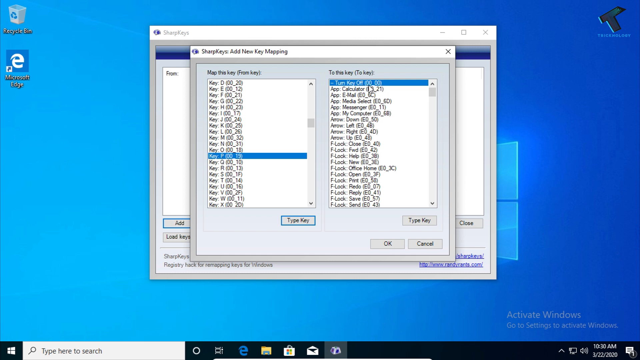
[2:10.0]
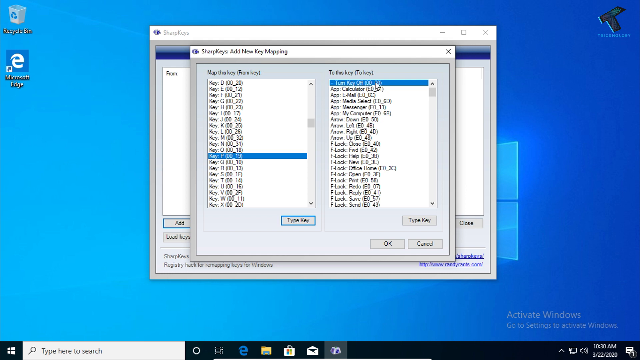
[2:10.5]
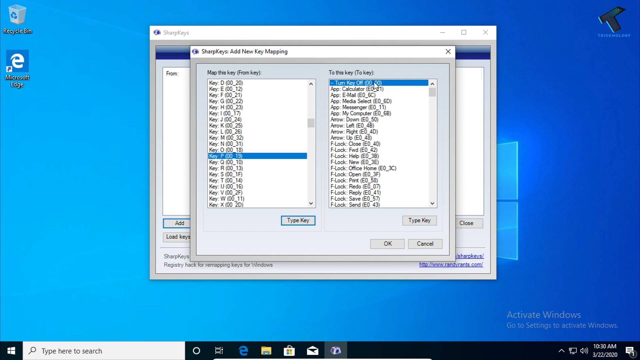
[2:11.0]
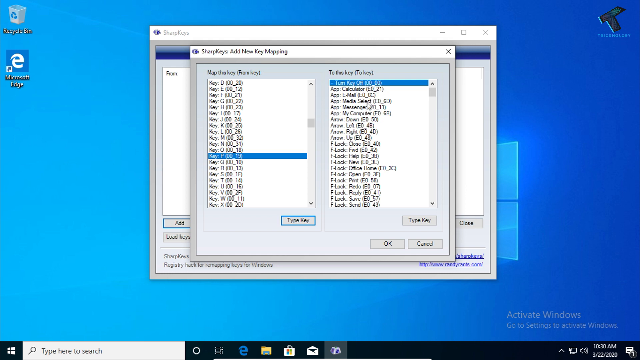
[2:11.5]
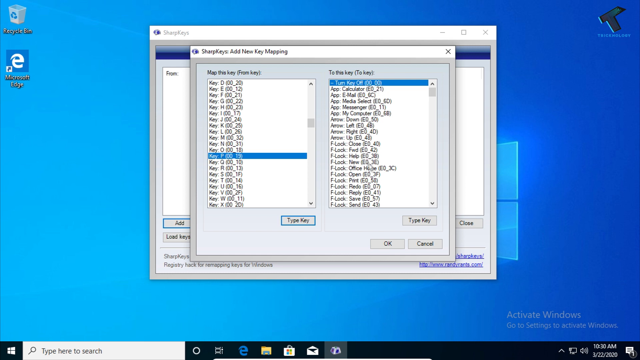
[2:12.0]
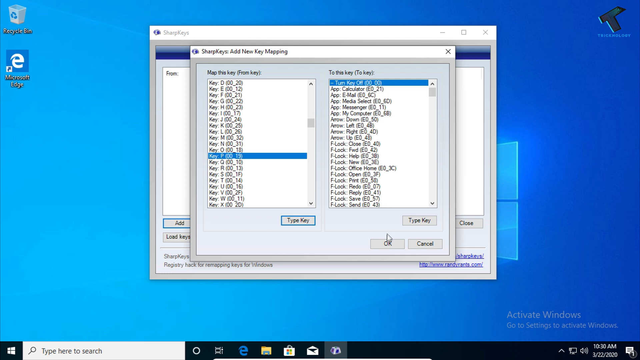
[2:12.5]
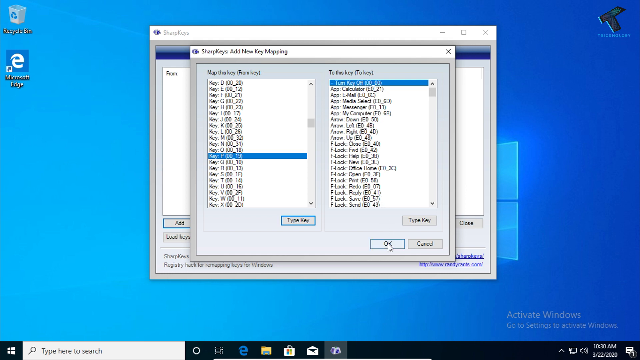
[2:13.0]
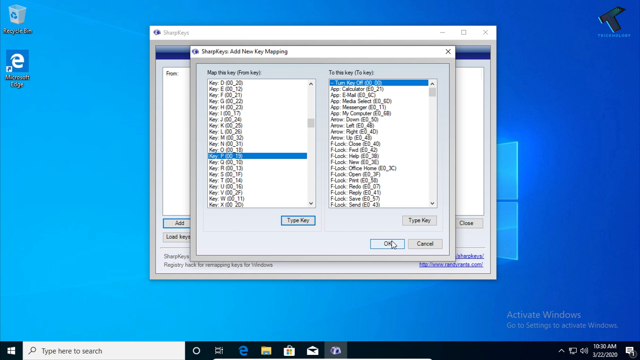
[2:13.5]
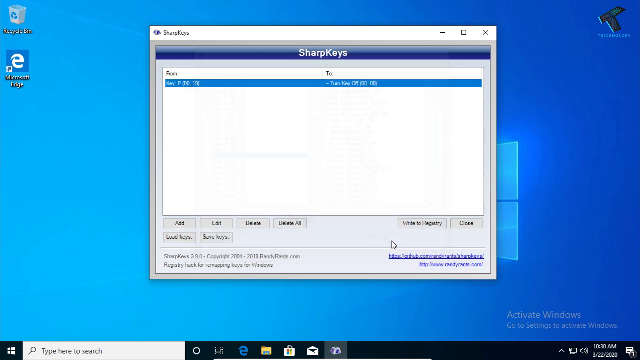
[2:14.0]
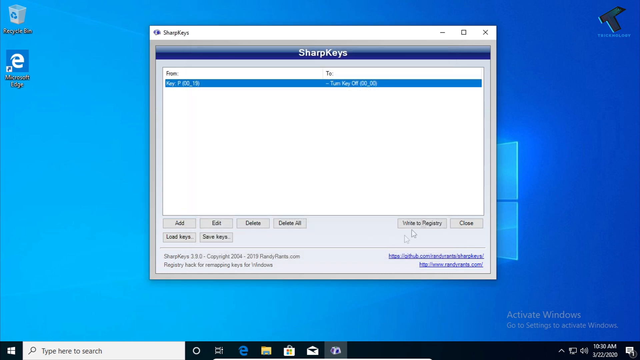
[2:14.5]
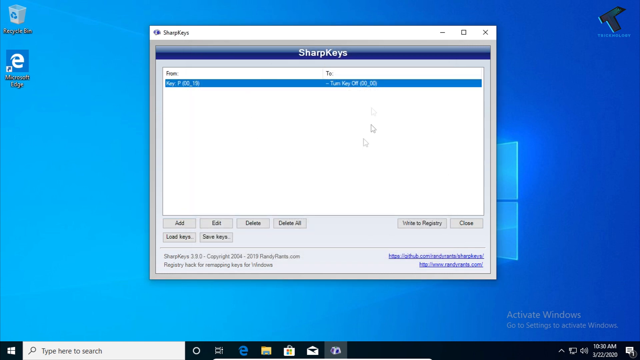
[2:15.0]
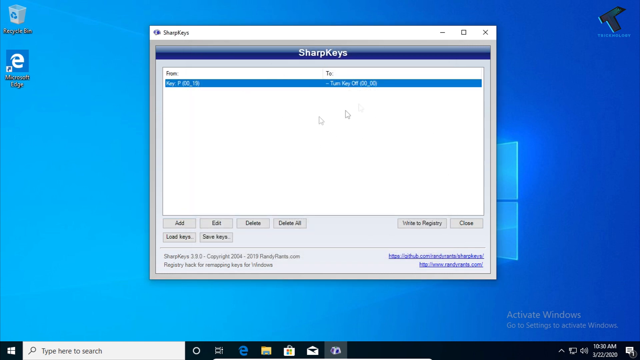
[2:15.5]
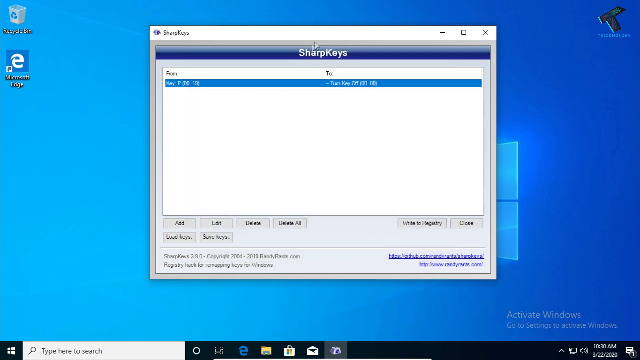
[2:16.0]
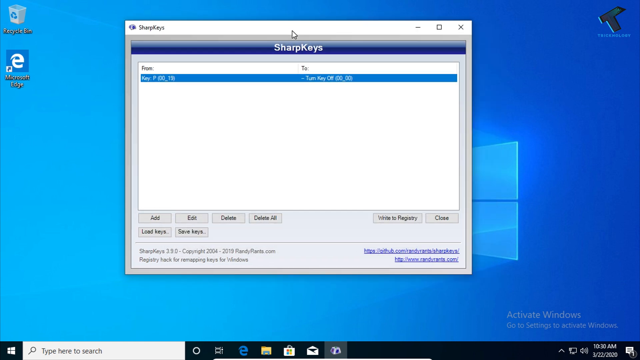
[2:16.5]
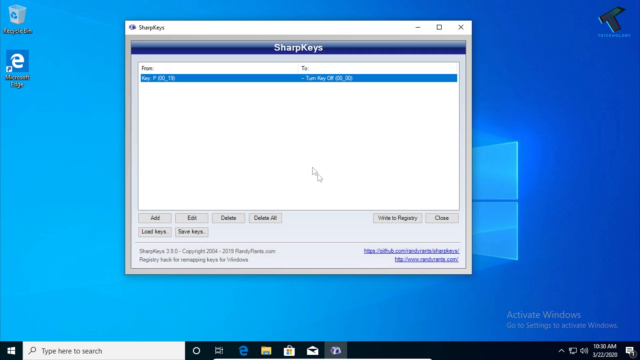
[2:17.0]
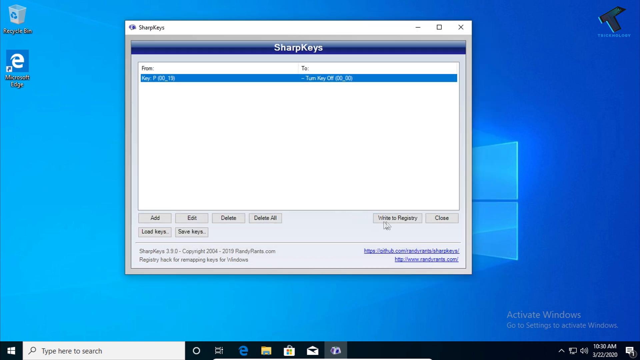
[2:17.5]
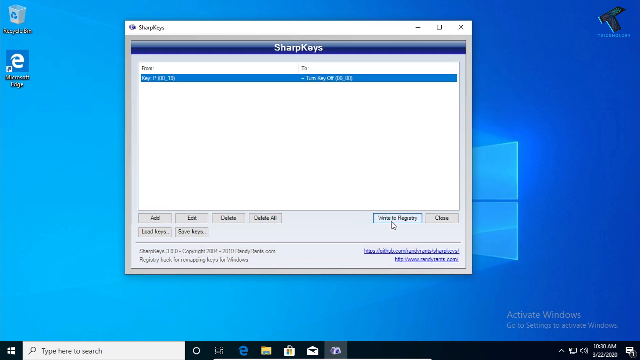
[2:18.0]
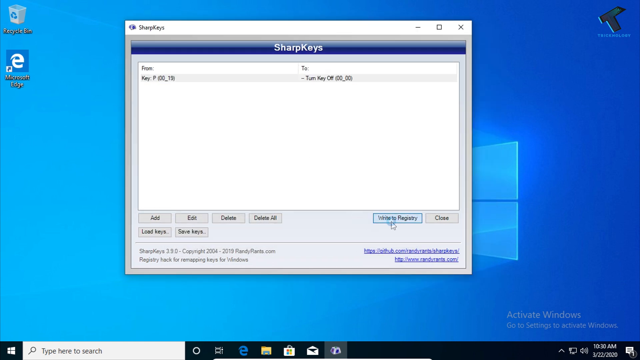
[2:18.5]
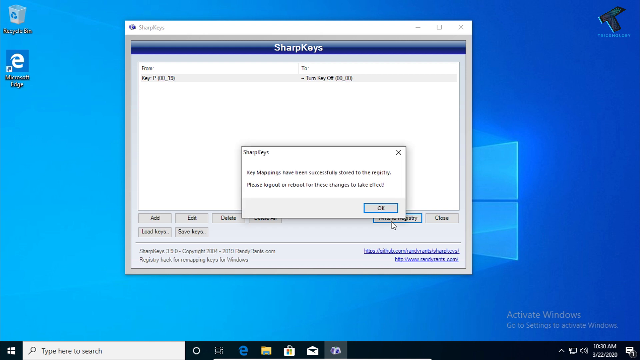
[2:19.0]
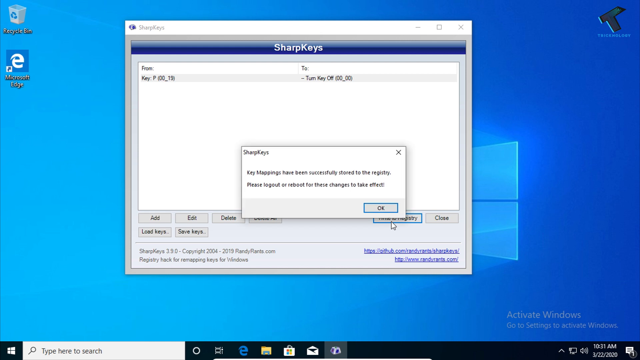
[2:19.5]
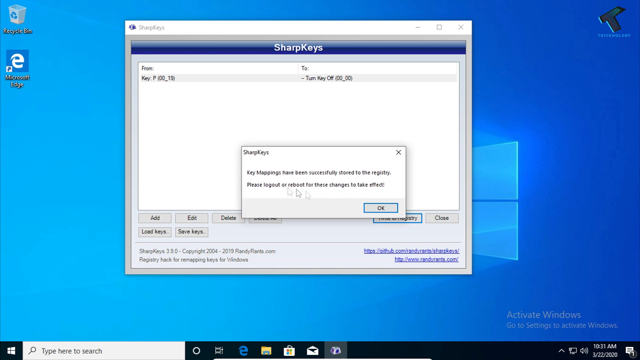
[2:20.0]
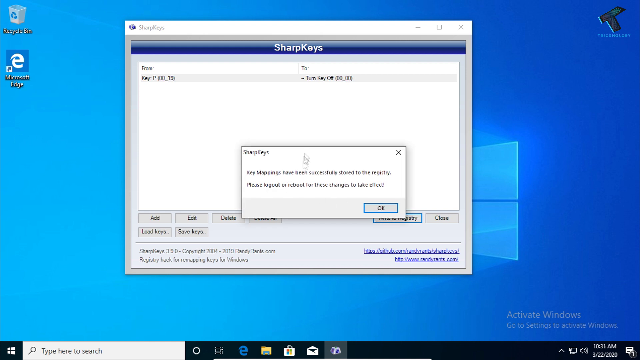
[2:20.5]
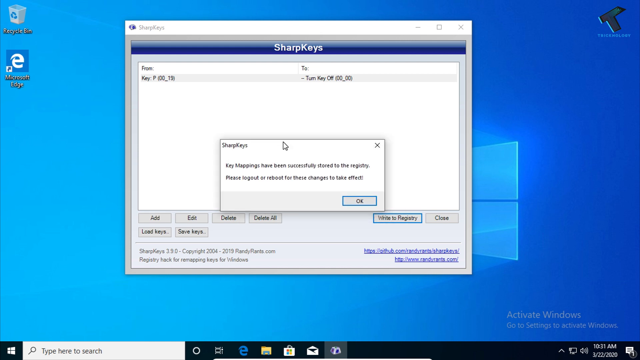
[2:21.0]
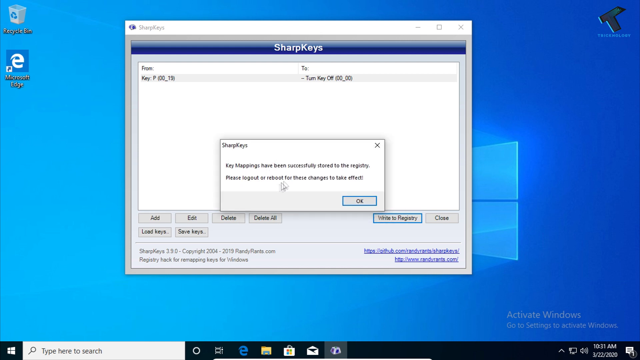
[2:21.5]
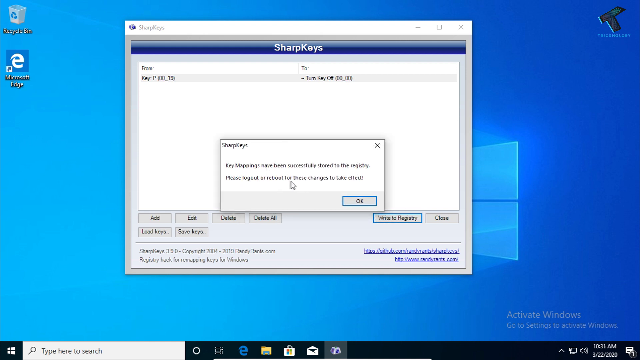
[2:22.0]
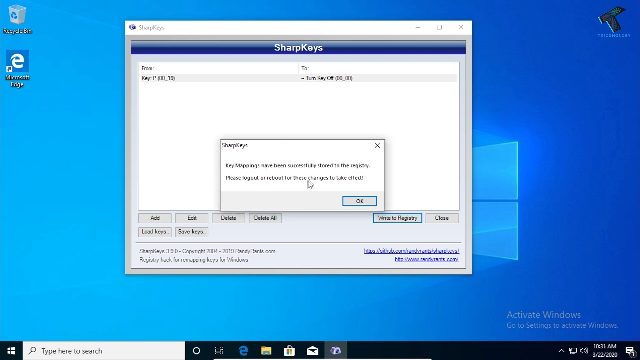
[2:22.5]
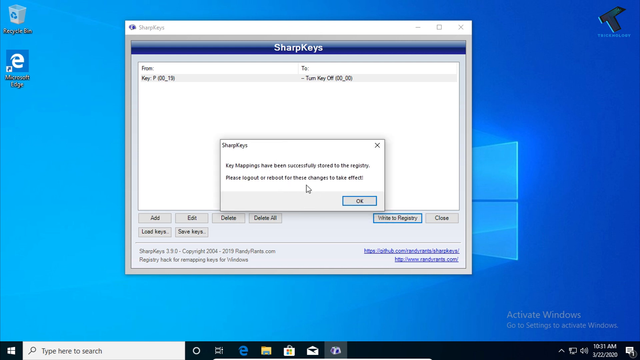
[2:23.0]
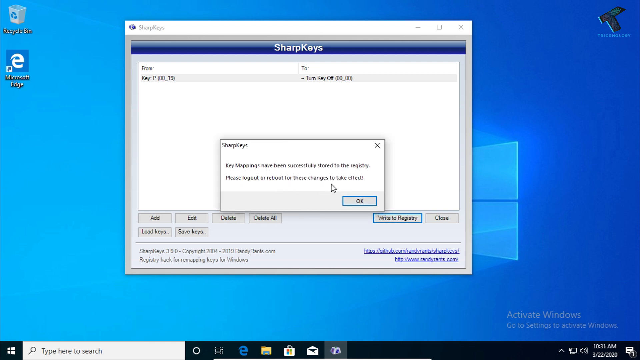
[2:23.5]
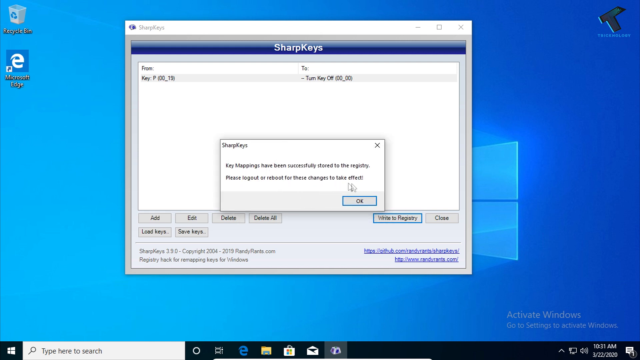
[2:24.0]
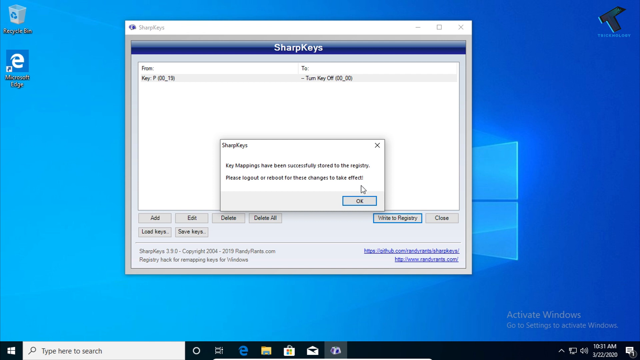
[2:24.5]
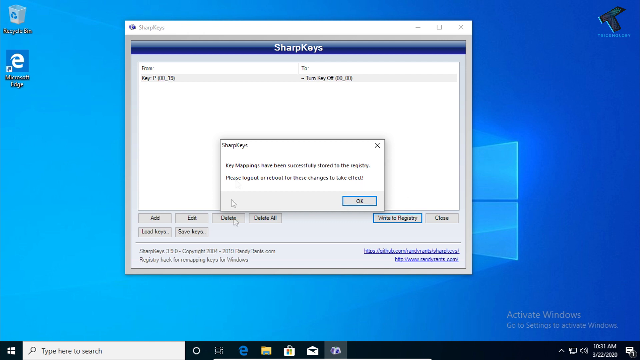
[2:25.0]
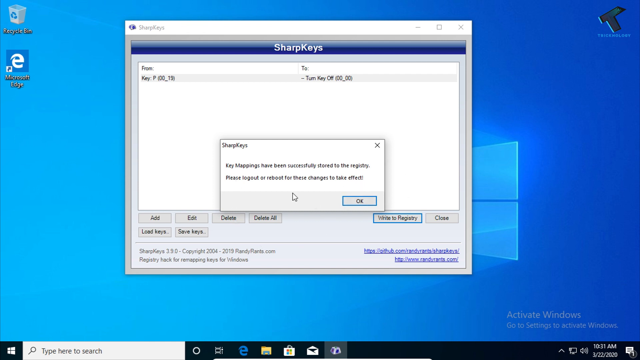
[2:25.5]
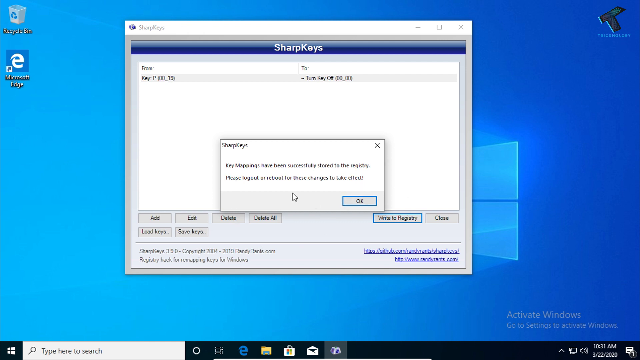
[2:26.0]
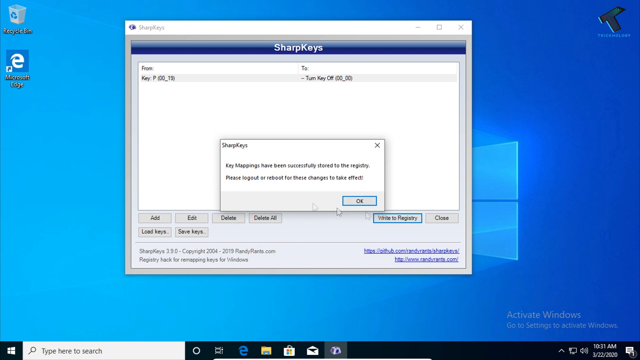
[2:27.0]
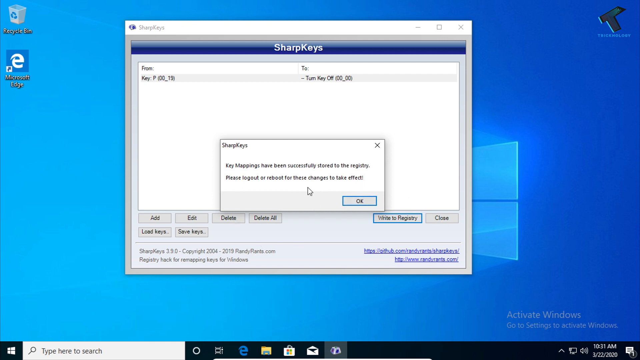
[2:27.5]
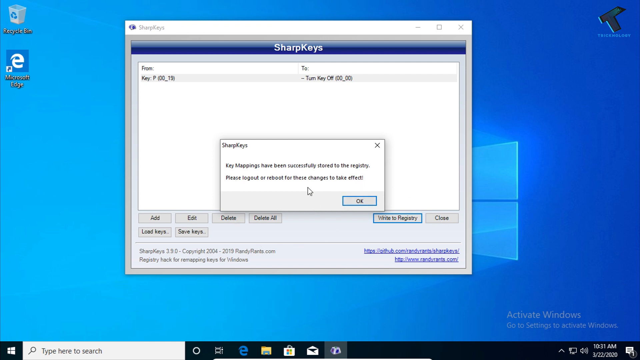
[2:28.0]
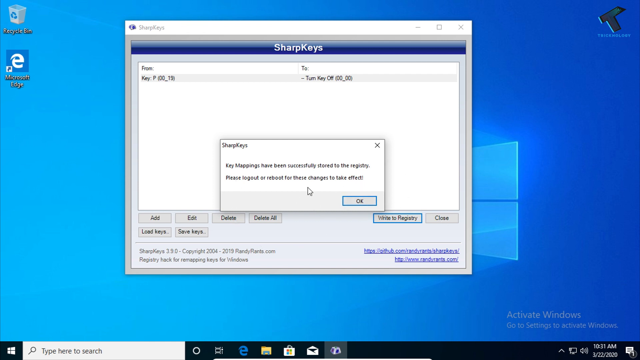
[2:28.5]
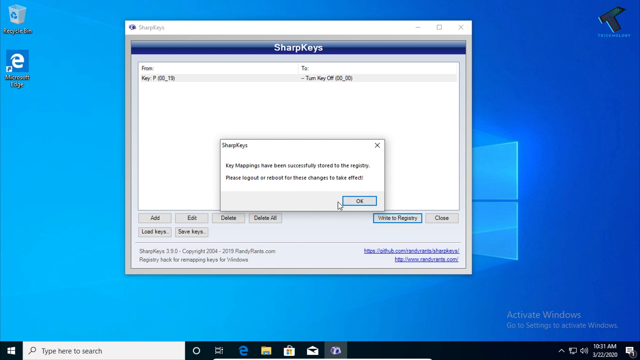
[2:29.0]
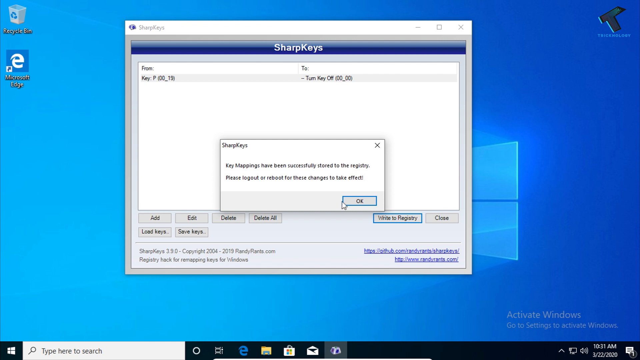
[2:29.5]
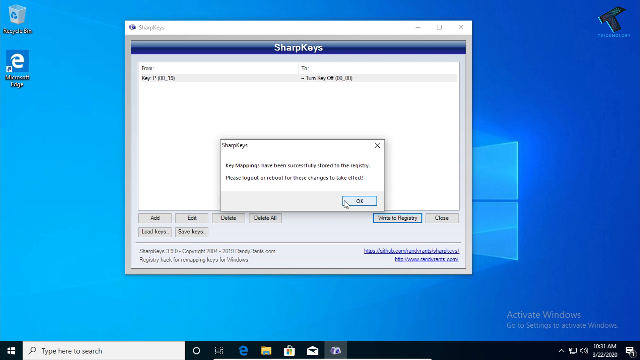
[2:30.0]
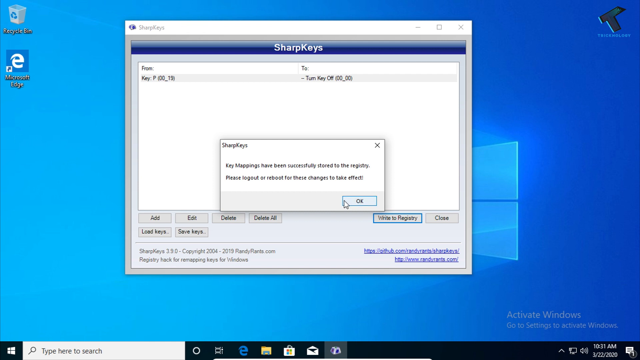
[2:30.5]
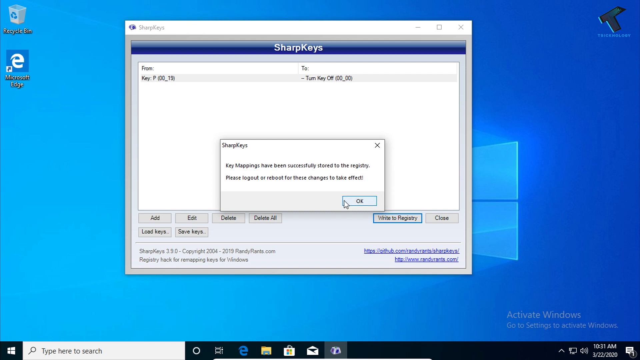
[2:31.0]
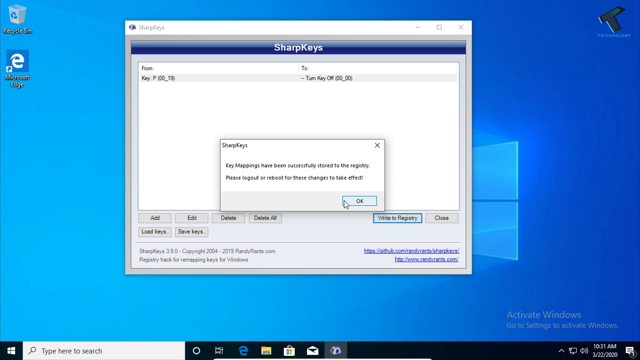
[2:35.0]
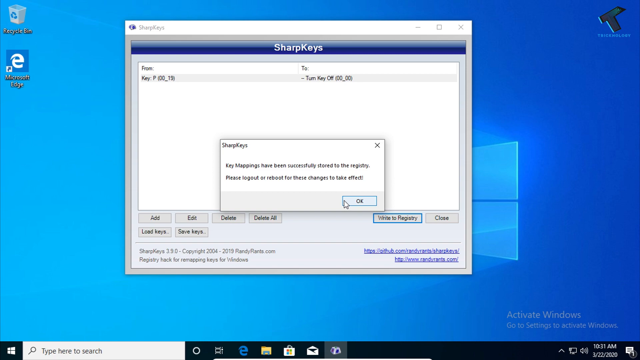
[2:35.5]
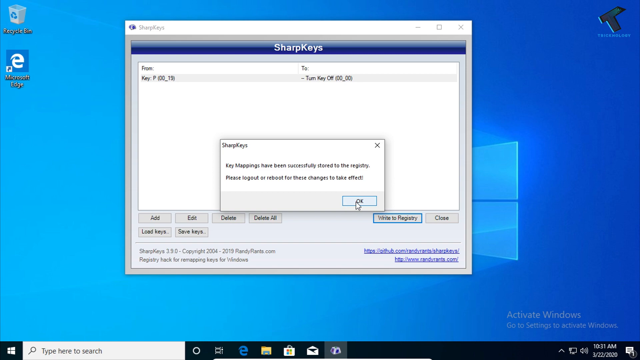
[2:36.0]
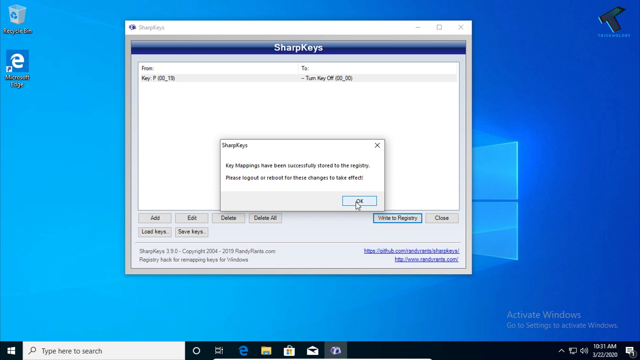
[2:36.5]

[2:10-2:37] The SharpKeys program is open in a window, with the SharpKeys add new key mapping window overlaid on top of it, apparently for mapping keys on the keyboard to different functions. The P key appears to be selected, and a screen then shows less information than the previous window, indicating a mapping from key P to another key. The user seems to select an option labeled "write to registry", and a pop-up window appears saying something about the key mappings having been successfully stored to the registry. The cursor moves around all over the pop-up before the user appears to close it.